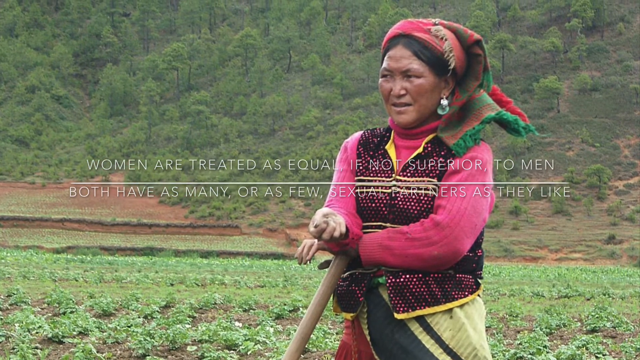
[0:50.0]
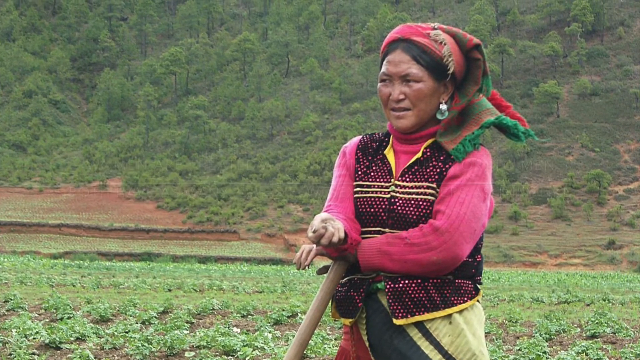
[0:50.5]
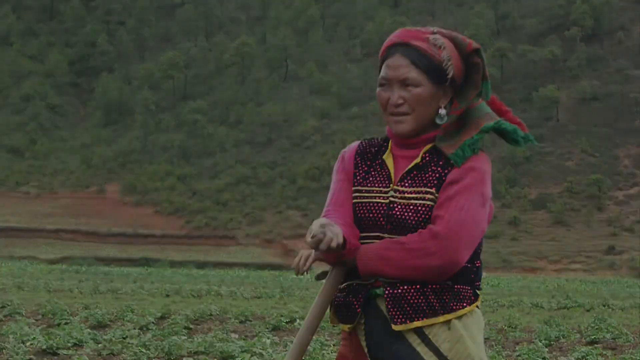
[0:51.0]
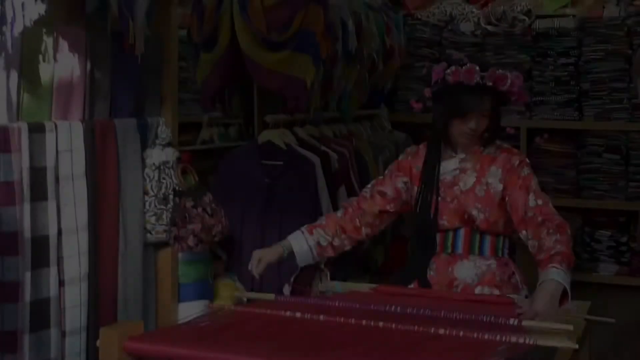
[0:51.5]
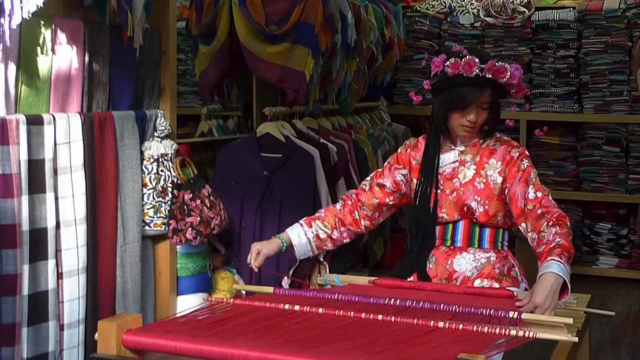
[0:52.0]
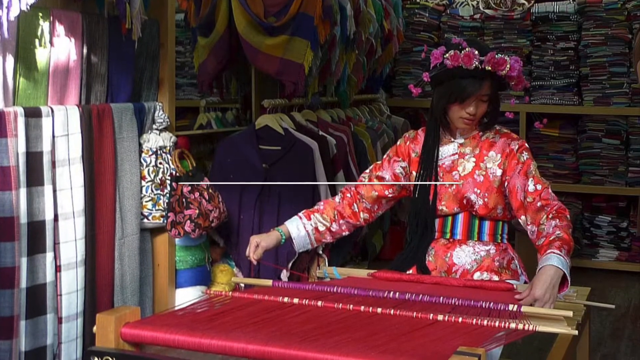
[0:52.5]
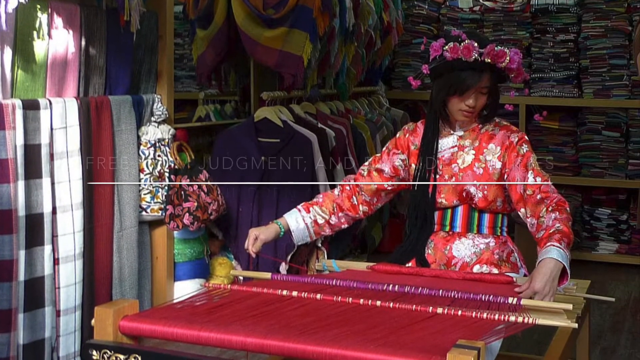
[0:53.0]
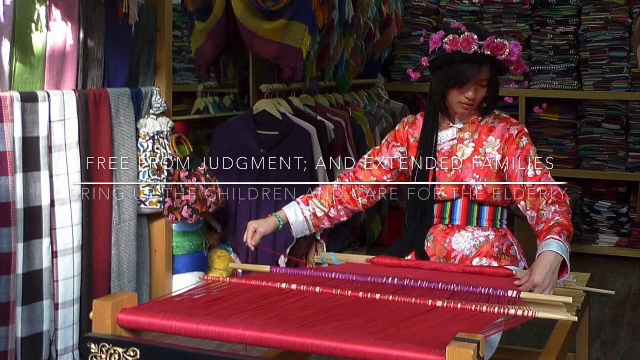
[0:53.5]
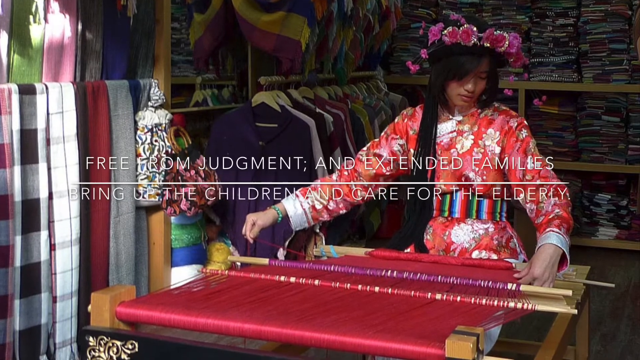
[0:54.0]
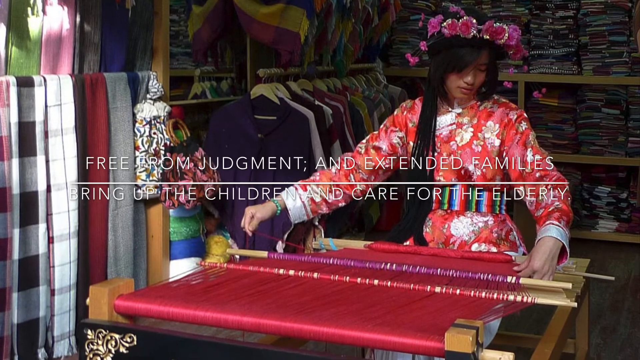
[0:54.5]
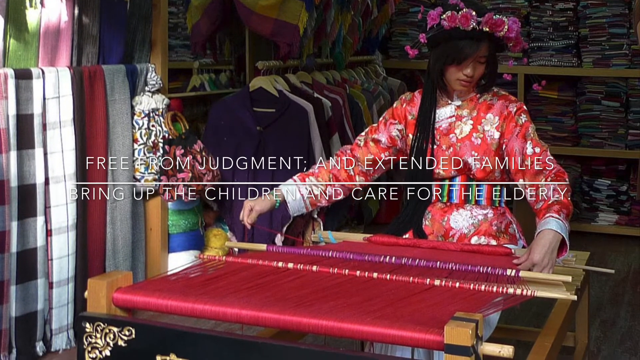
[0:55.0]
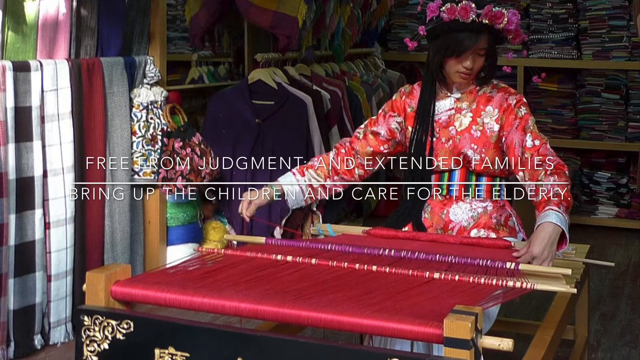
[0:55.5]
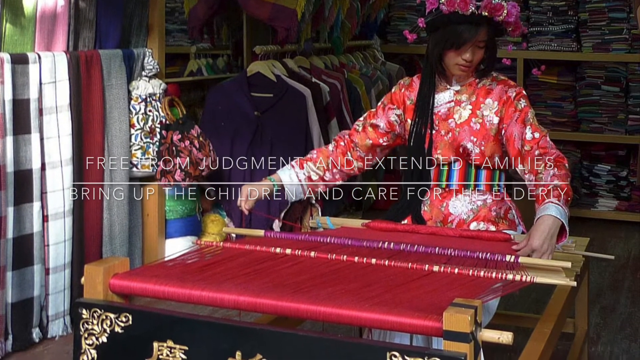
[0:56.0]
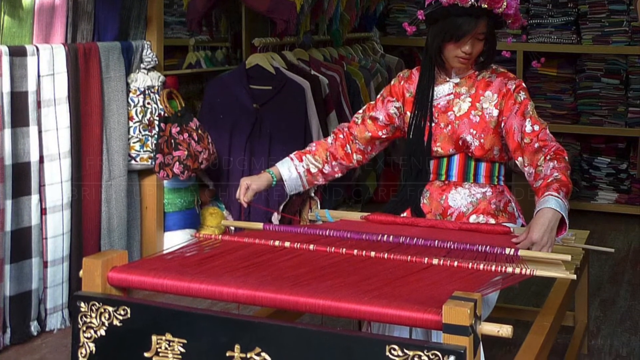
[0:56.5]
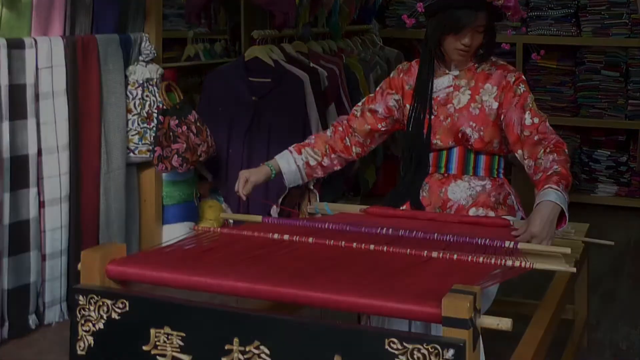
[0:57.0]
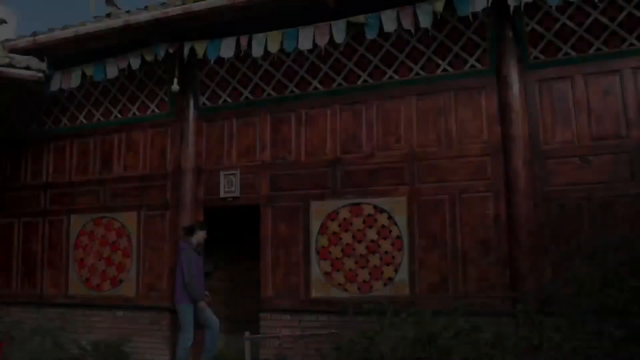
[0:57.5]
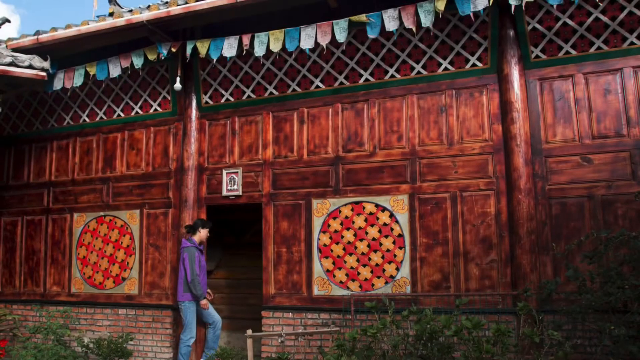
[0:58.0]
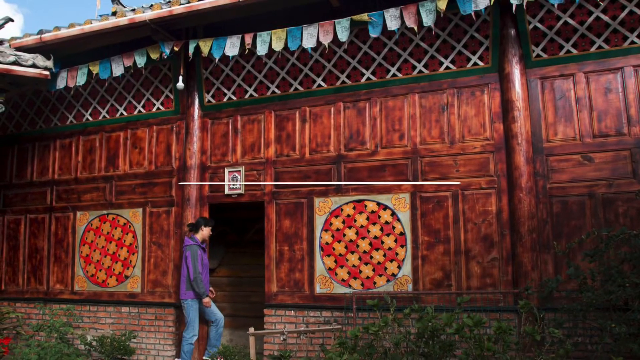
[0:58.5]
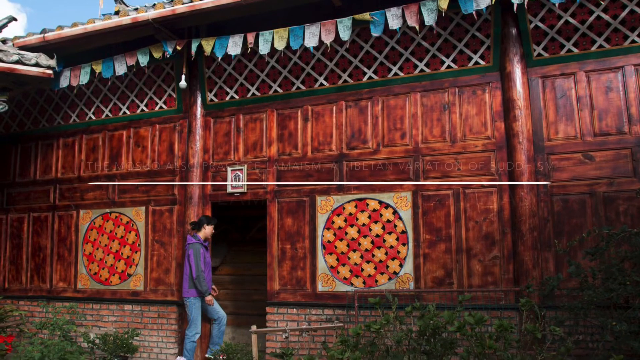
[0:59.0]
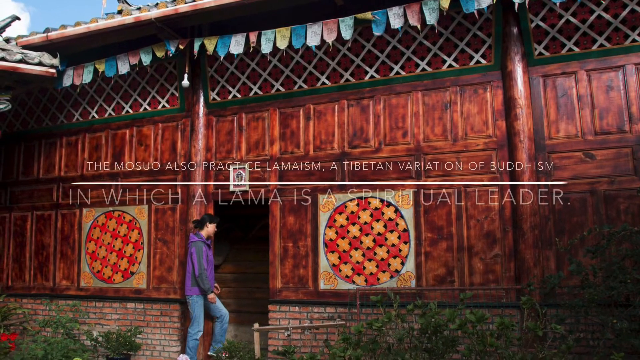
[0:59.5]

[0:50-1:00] A picture shows one of the ladies wearing a sort of bandana-type headdress. Text in the middle reads "women are treated as equal, if not superior to men, both have as many or as few sexual partners as they like." The picture then switches to another lady who appears to be working on some sort of decoration; she wears a long-sleeve red dress covered with white flowers. More text in the middle reads "free from judgment and extended families, bring up the children and care for the elderly."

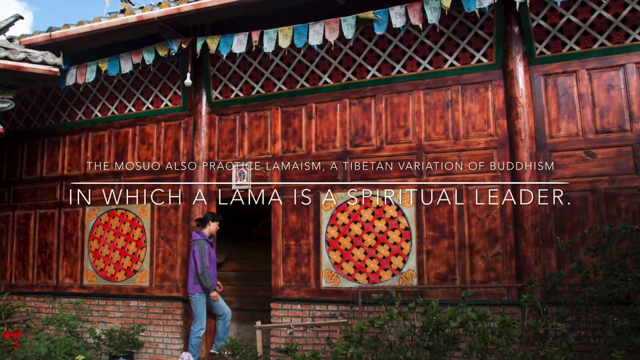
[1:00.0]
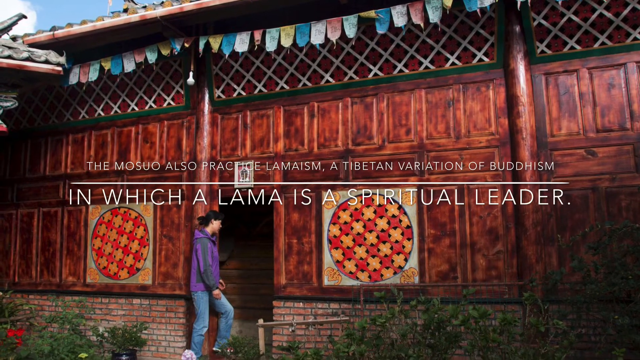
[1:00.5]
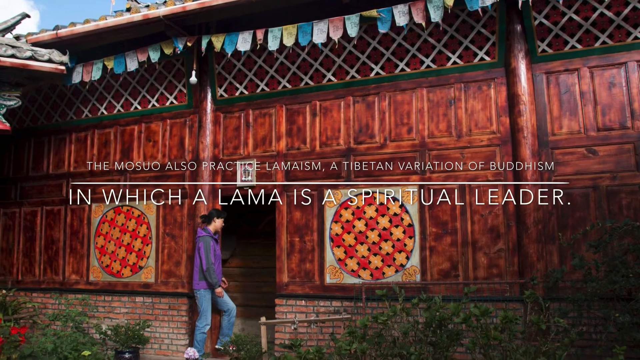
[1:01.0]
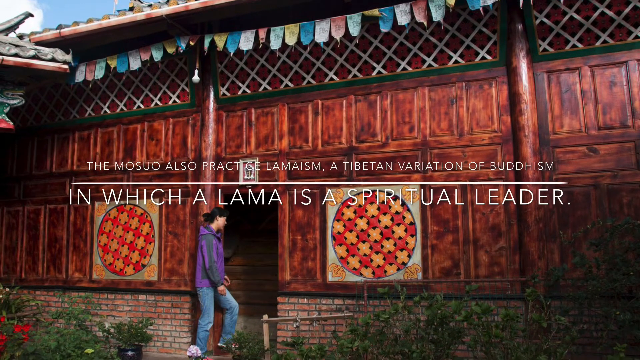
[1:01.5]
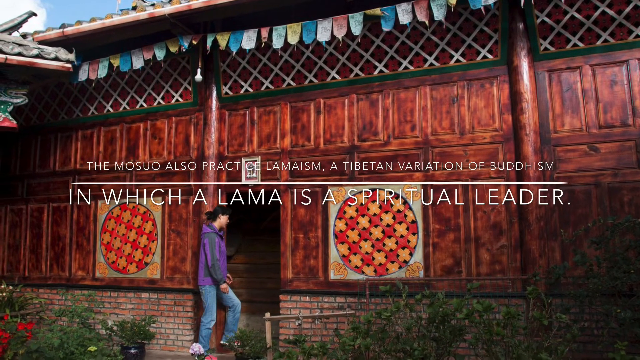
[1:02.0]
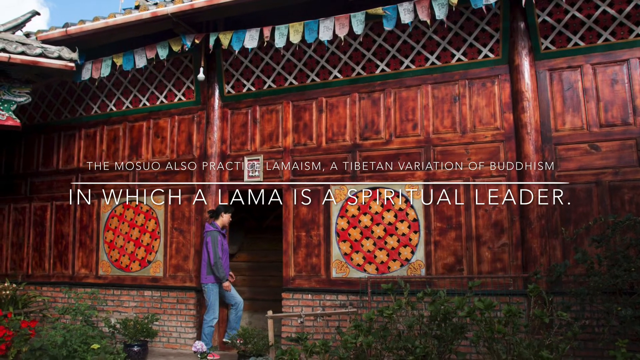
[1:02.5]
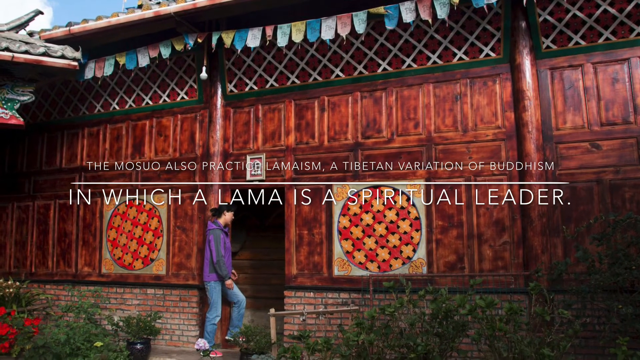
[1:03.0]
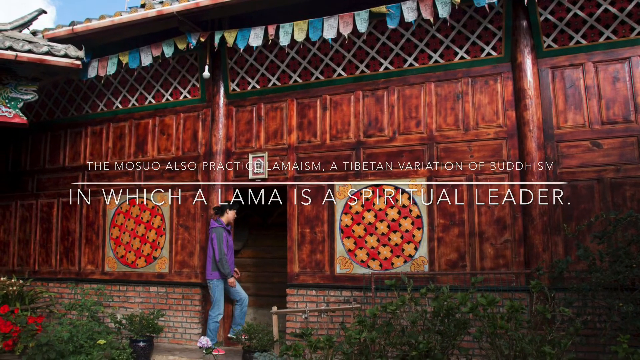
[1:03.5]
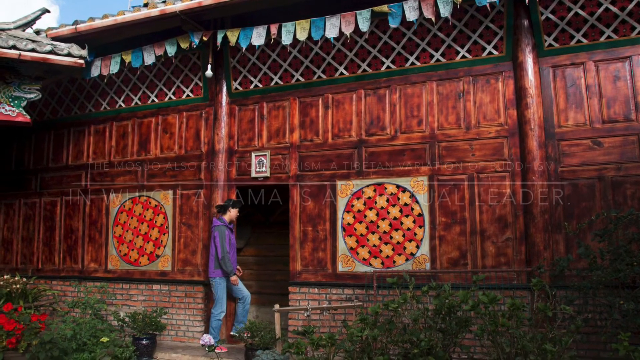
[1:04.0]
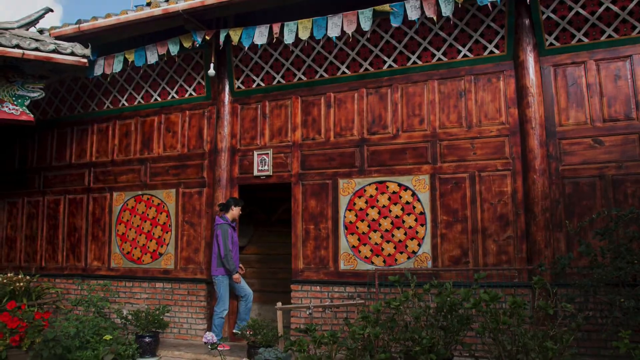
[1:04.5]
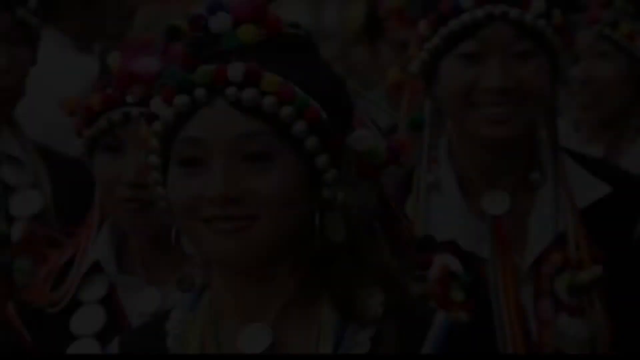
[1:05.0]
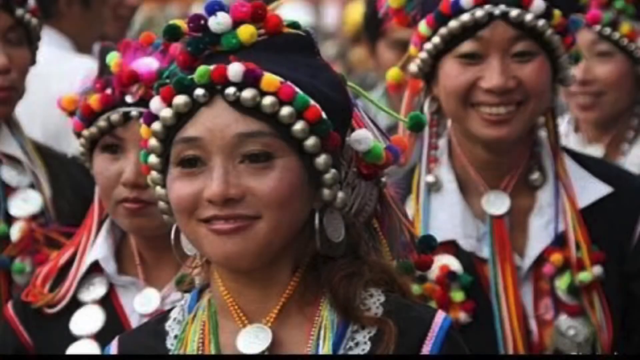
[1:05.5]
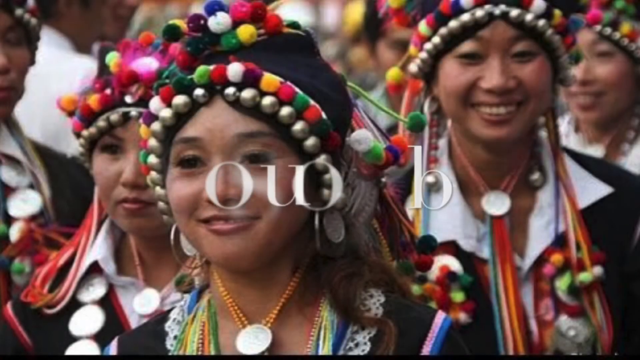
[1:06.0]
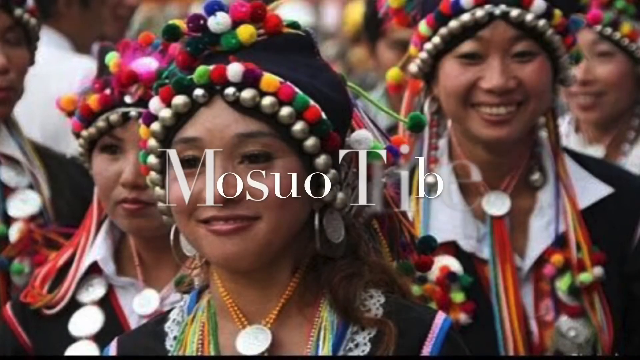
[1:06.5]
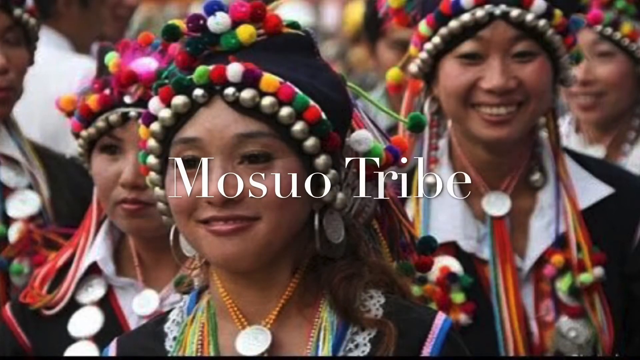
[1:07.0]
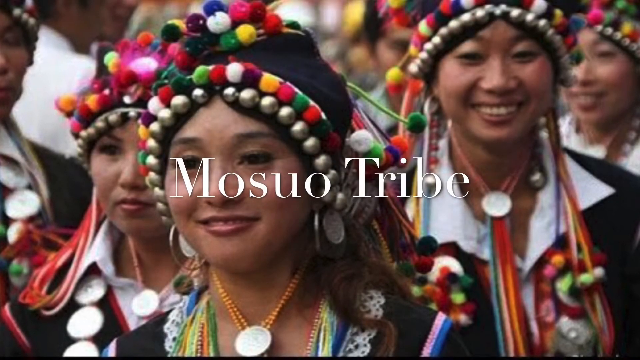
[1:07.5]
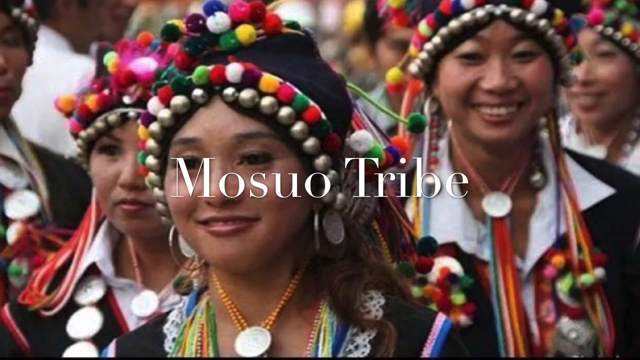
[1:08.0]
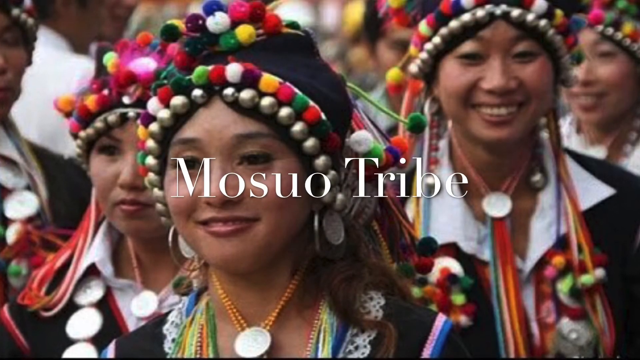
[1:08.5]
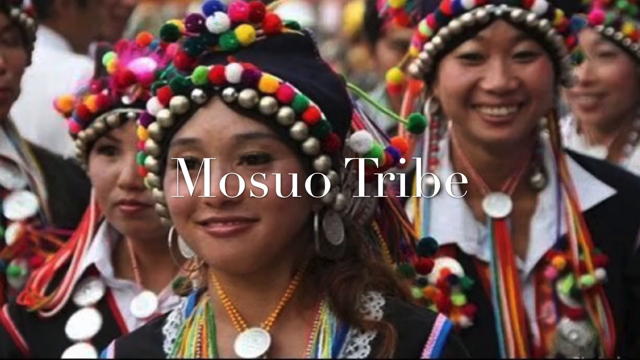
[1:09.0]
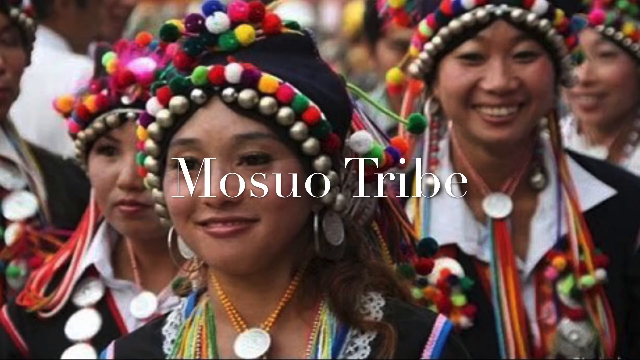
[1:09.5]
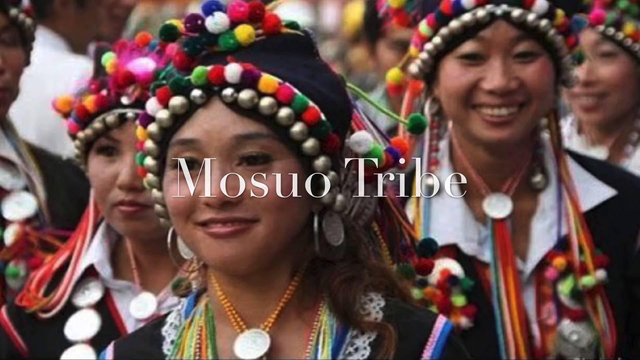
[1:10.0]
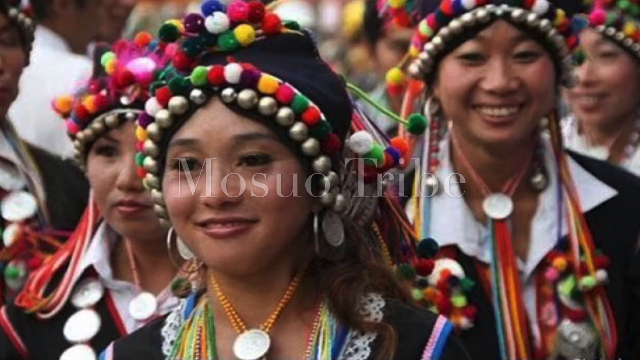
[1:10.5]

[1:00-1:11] A picture shows somebody entering a big building, with text in the middle beginning "the Muso also practice" and continuing "a Tibetan variation of Buddhism in which a llama is a spiritual leader." Another picture then shows more women of the Muso tribe, all wearing really fancy headdresses: silver pearls along the bottom, colorful pearls on a second row, and a number of colorful orbs or pearls at the top. The headdresses look handmade.